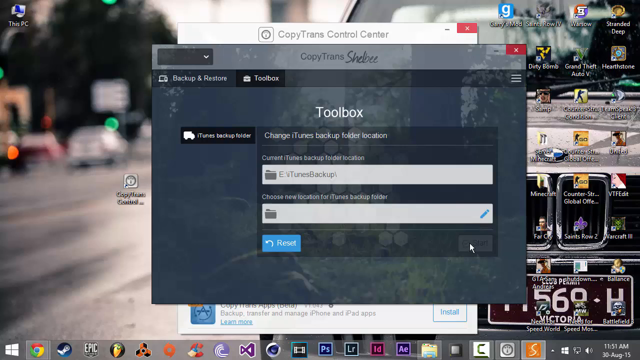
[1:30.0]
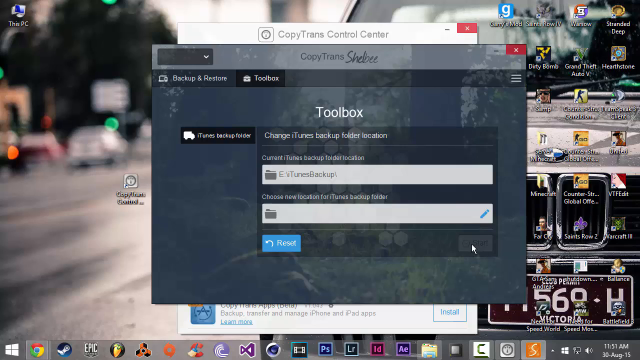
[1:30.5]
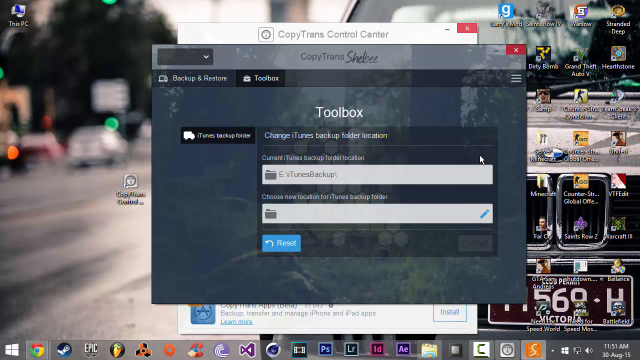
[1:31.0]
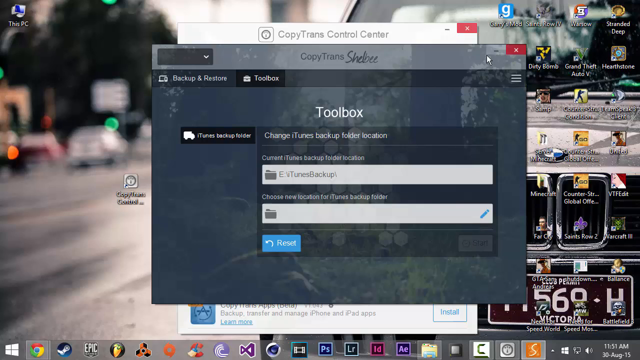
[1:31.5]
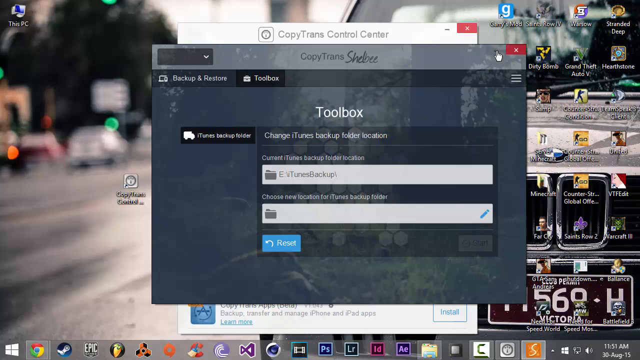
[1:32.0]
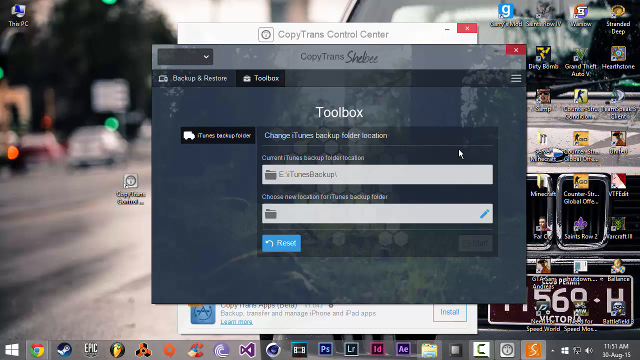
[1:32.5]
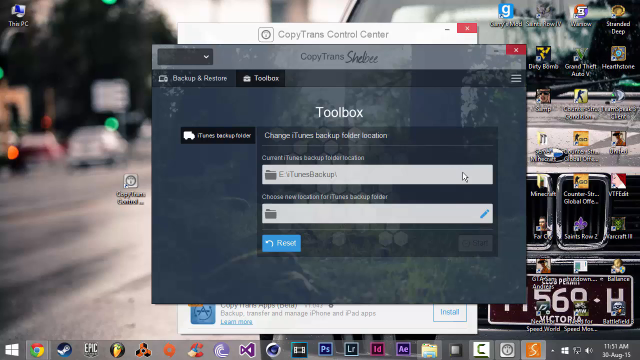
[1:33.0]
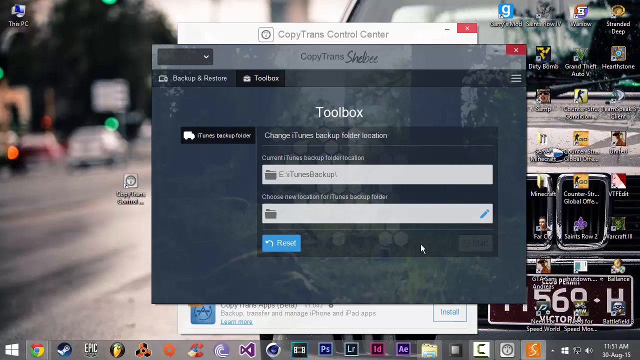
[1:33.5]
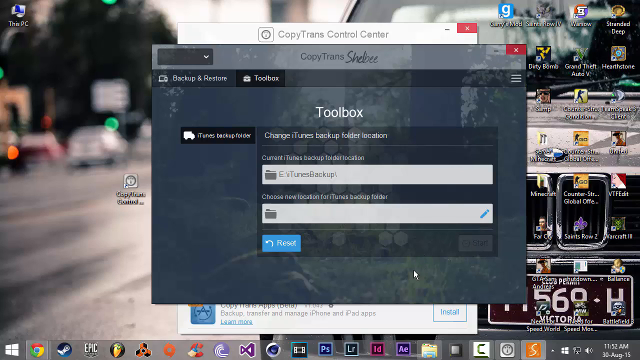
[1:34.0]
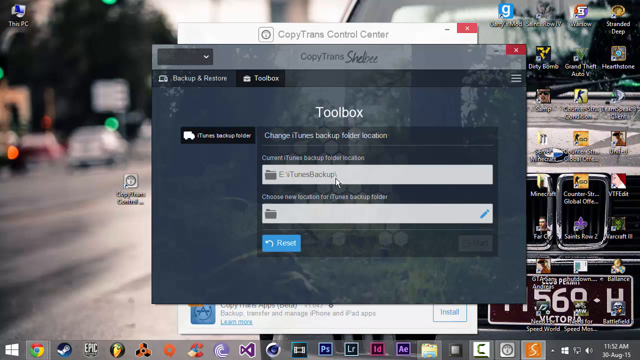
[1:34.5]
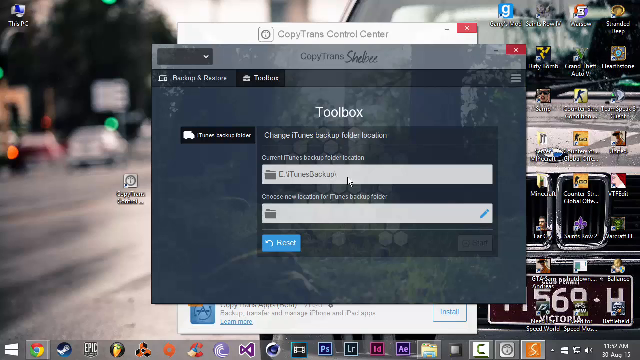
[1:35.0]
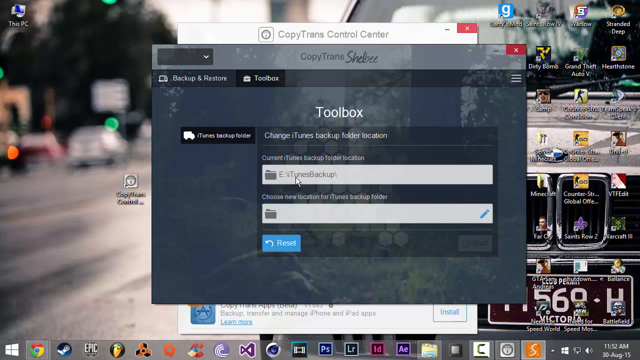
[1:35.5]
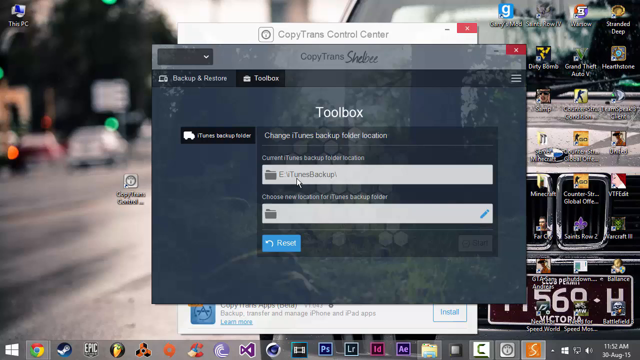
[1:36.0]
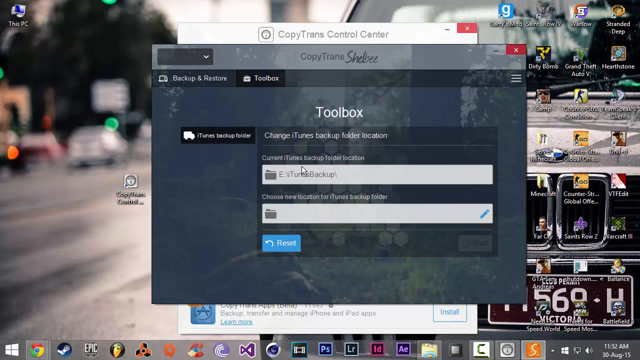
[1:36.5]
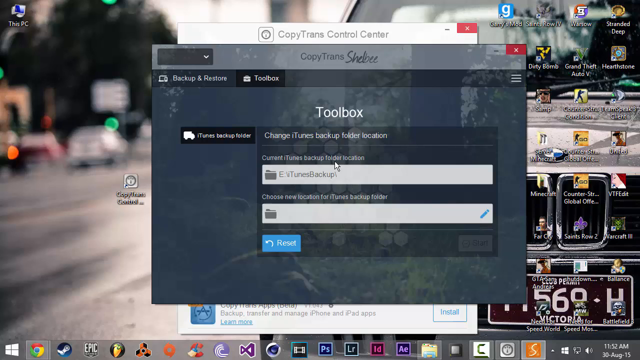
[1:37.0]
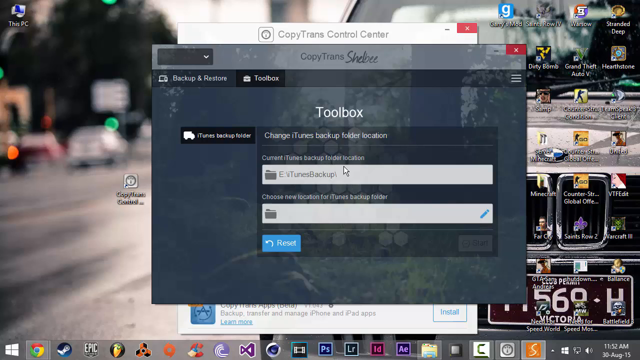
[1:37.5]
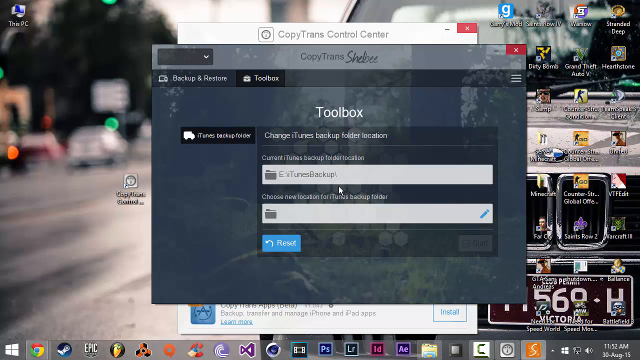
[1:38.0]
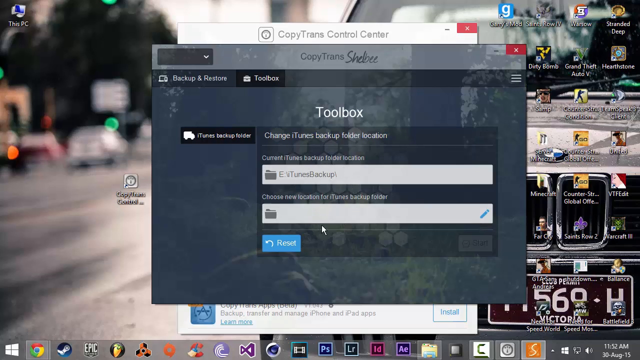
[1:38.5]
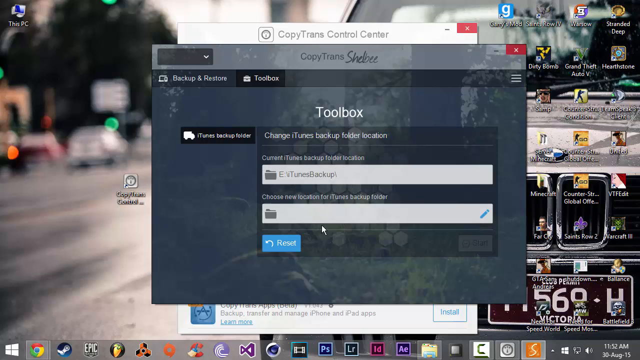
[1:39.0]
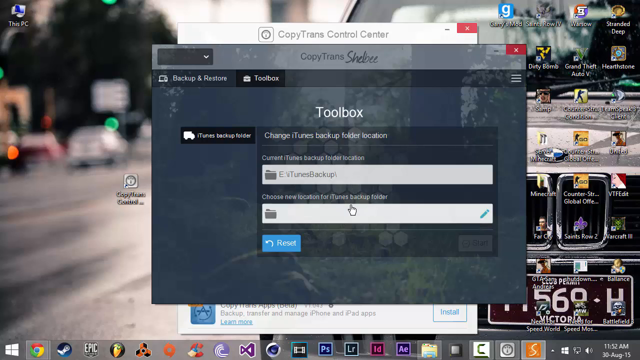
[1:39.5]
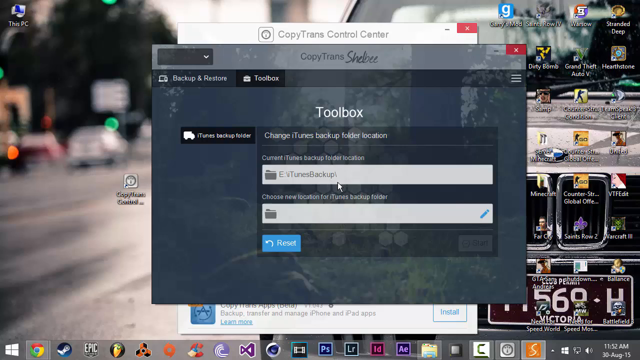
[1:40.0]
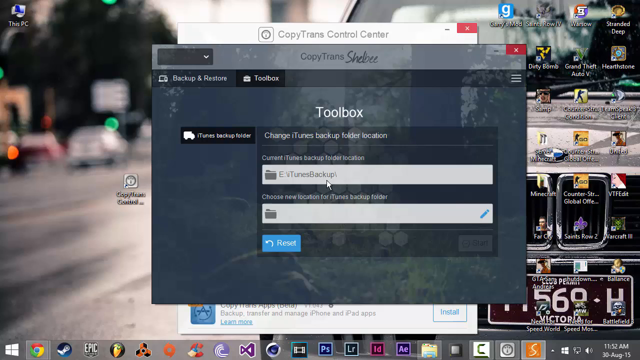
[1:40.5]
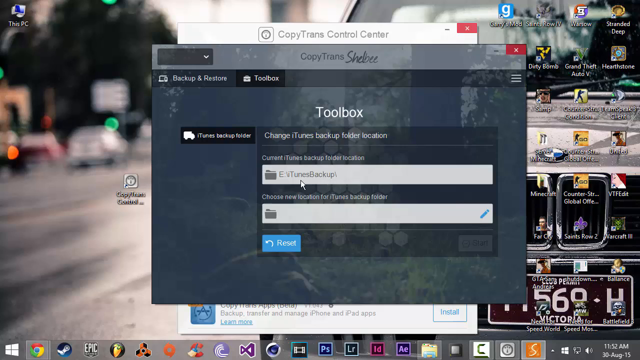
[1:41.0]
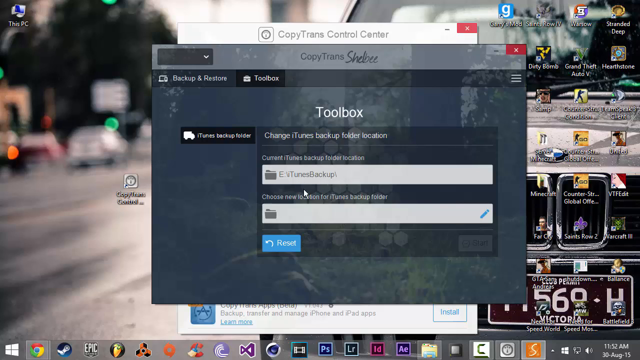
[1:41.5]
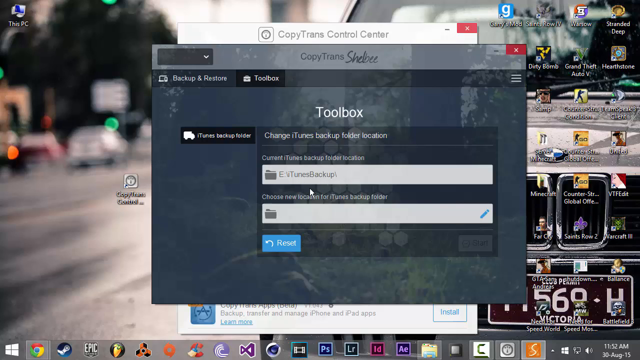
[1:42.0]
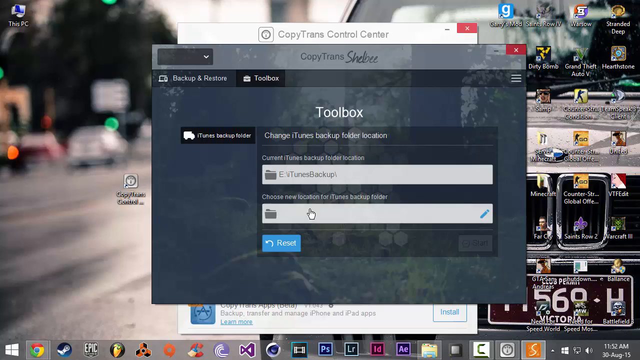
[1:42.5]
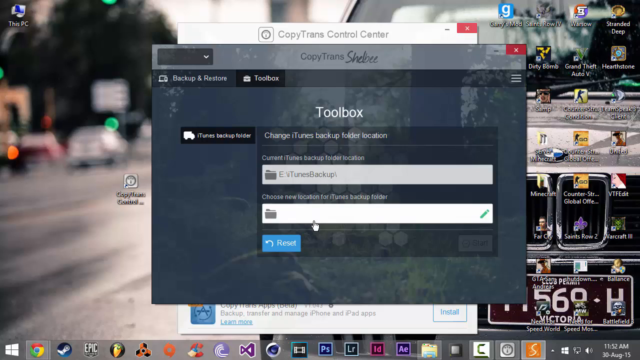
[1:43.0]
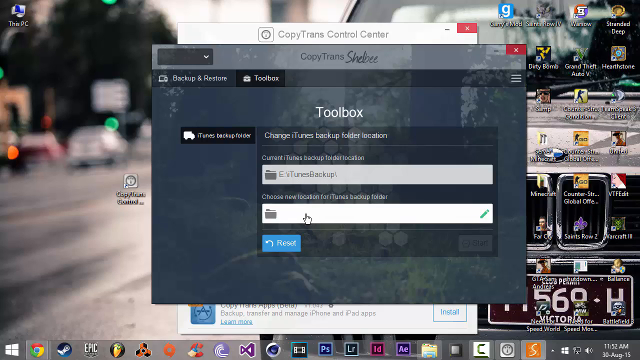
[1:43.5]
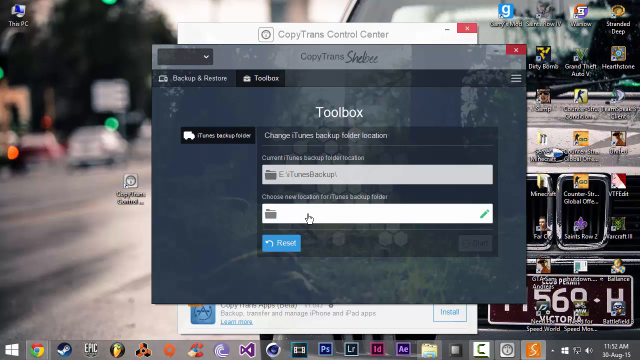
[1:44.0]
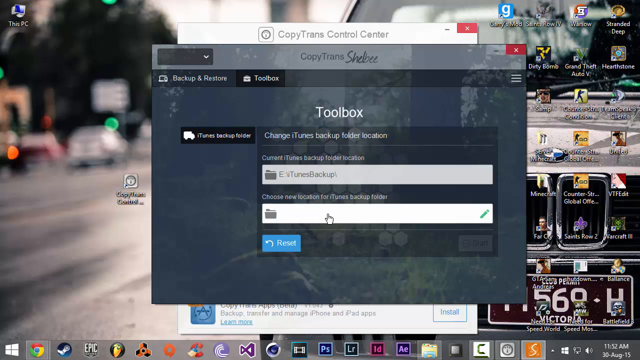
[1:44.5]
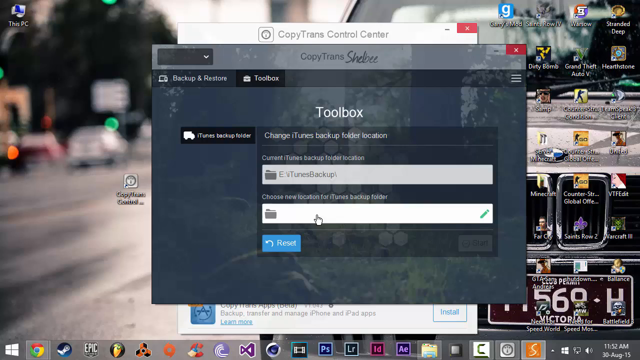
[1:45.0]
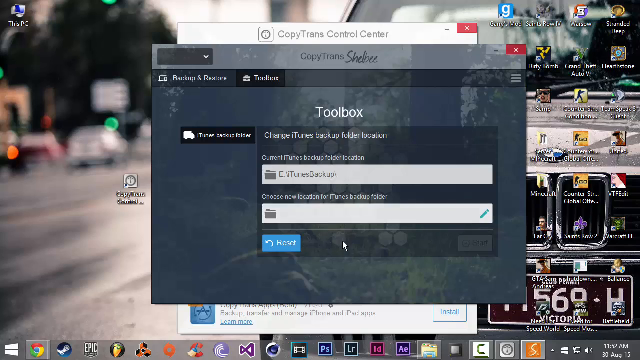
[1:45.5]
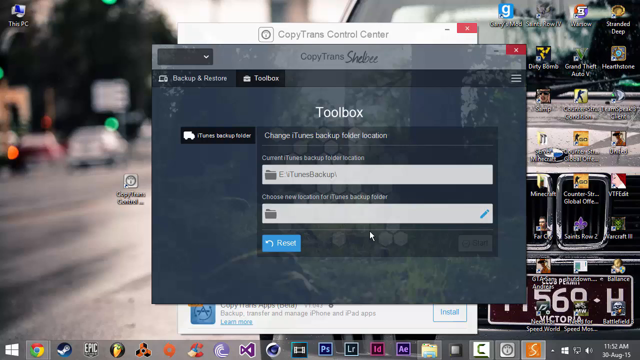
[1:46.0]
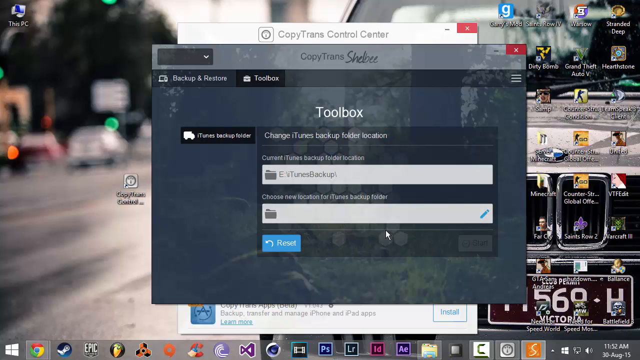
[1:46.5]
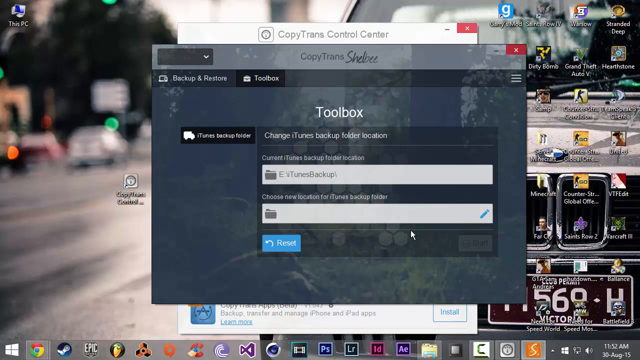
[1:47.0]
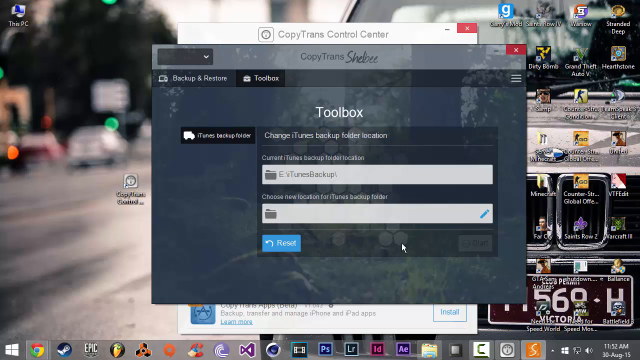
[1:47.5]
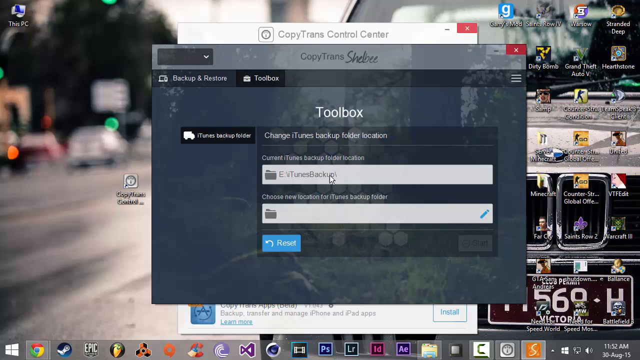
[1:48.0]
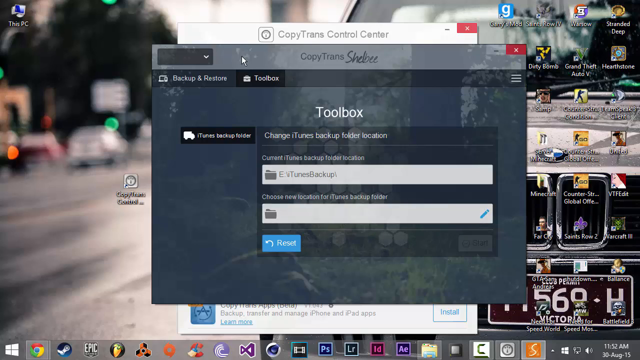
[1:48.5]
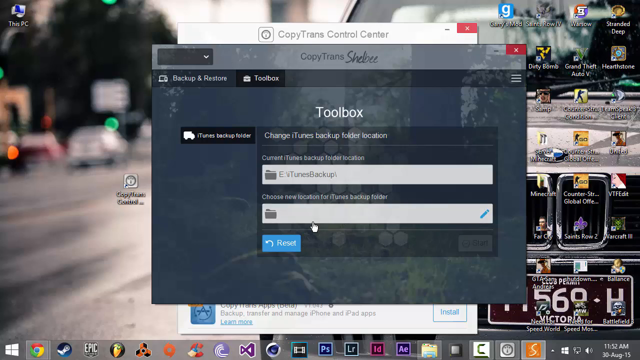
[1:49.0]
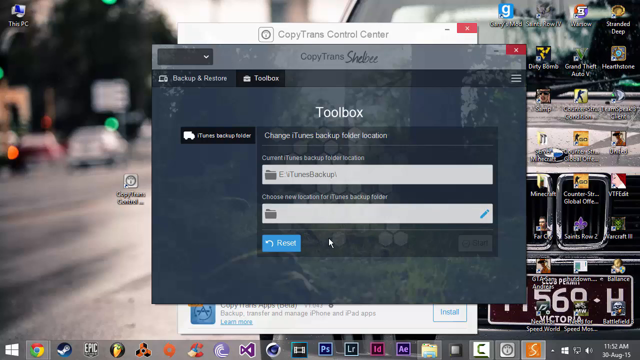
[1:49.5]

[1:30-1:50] A window open on a person's computer screen says "Toolbox" in white text, with two input fields below it. The user seems to hover over one input field, then over the second, and then back to the first. Underneath the input field is a blue button that says "Reset" in white text. The rest of the window looks kind of like a see-through gray. There are tabs at the top, one saying "toolbox" and another saying "backup and restore", and at the top is a title that says "copy trans Shelby". In the top right corner are a minimize button and a burgundy X button to close. Behind this window another window is open, and in the background is a screensaver of a street with a parked car that looks like a gray BMW.